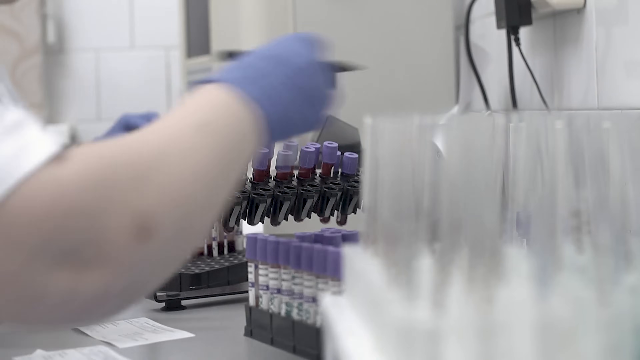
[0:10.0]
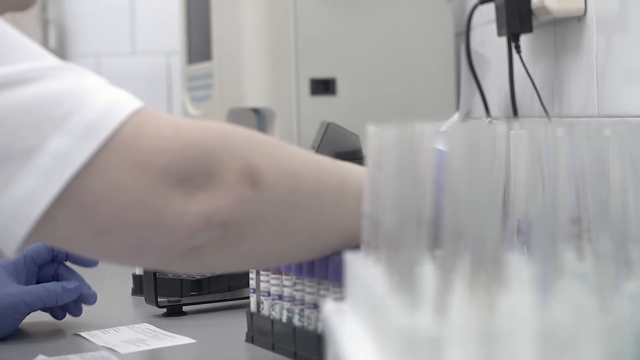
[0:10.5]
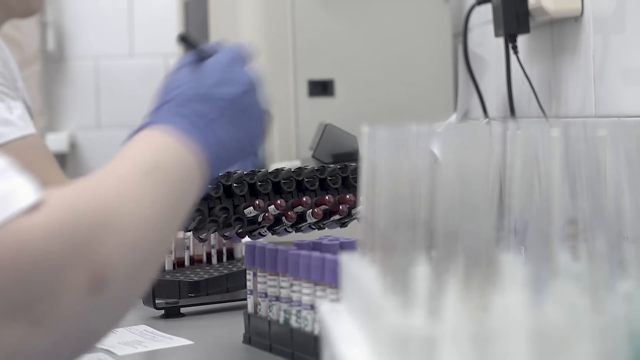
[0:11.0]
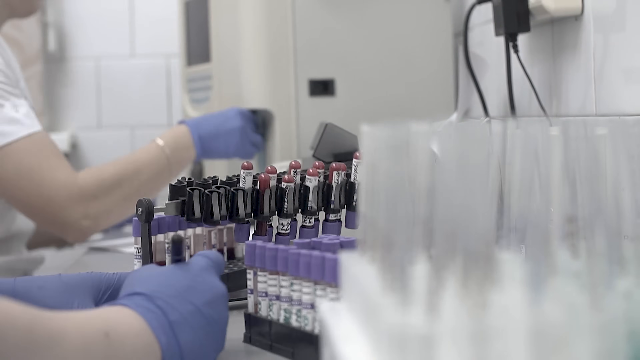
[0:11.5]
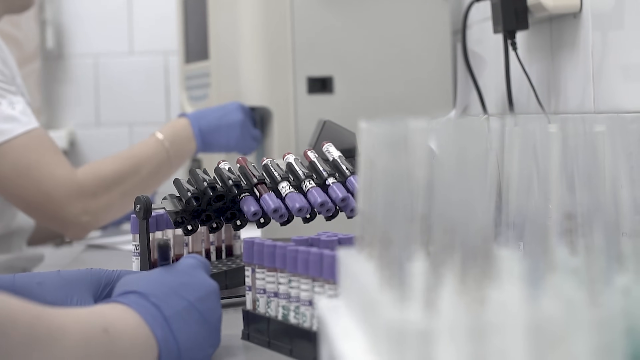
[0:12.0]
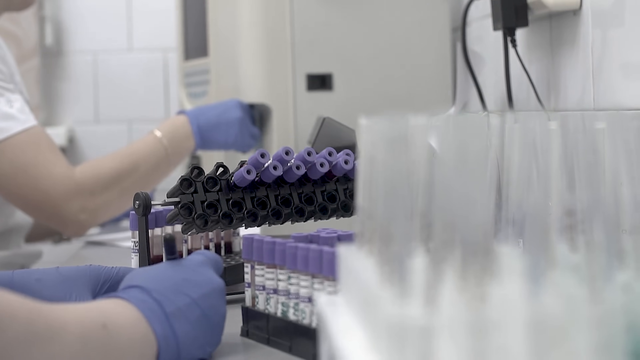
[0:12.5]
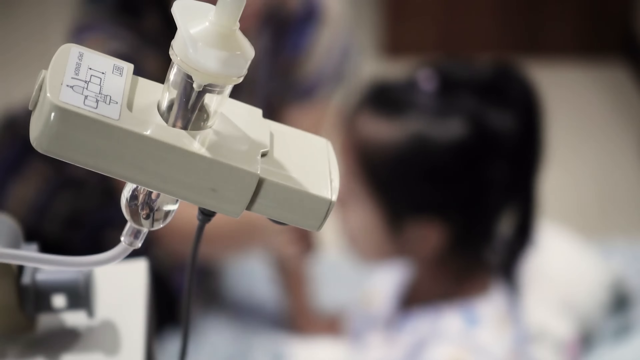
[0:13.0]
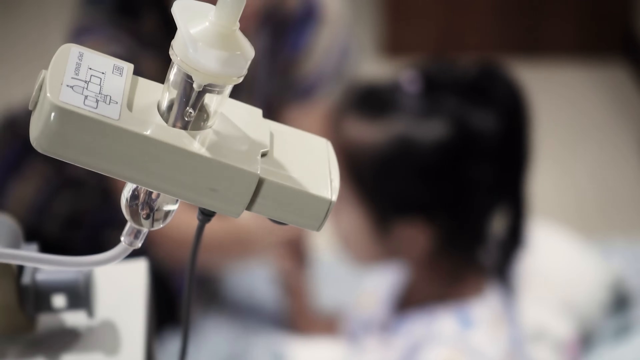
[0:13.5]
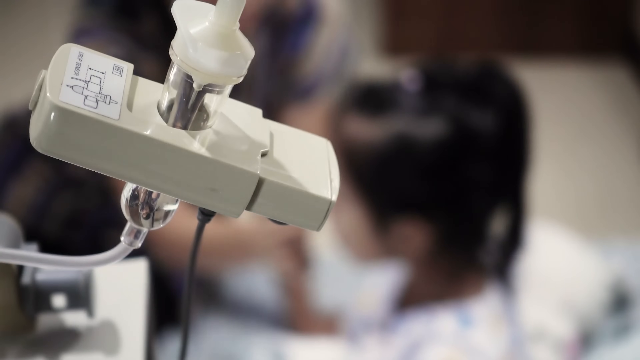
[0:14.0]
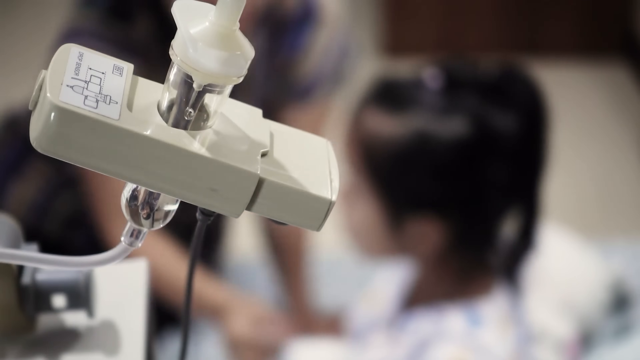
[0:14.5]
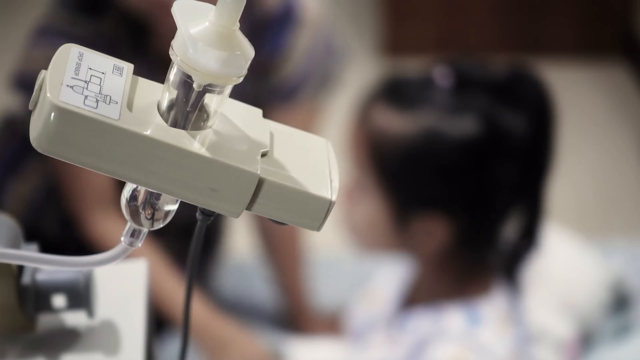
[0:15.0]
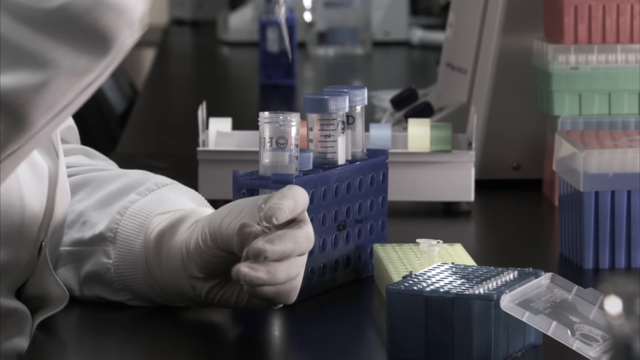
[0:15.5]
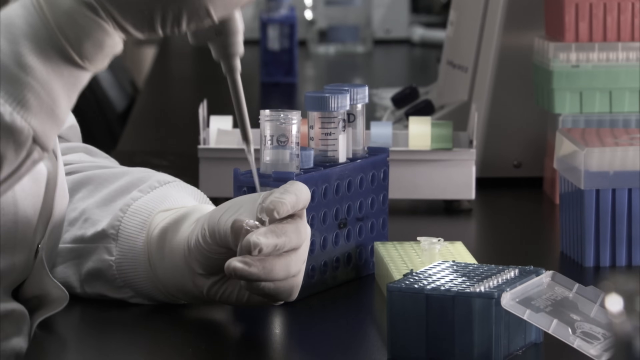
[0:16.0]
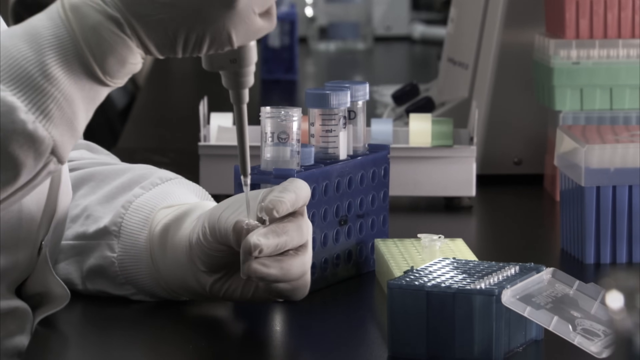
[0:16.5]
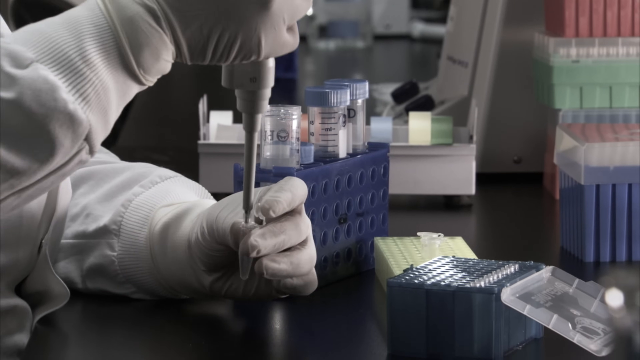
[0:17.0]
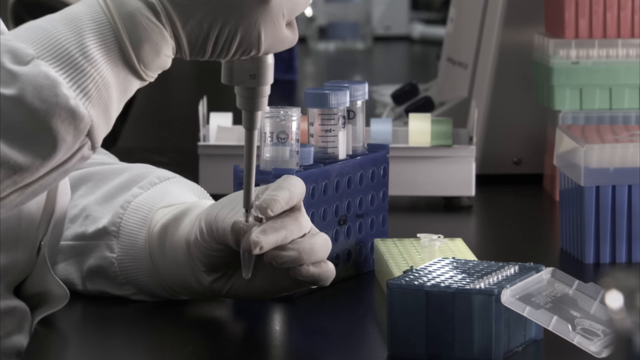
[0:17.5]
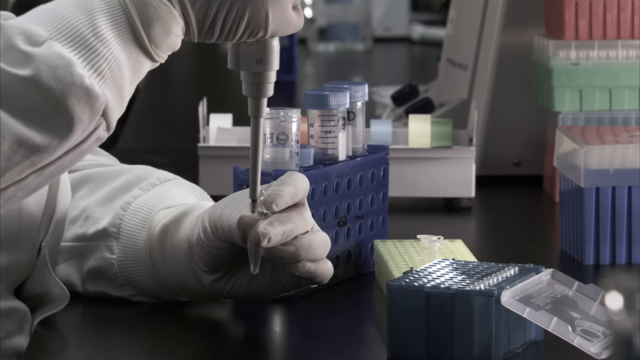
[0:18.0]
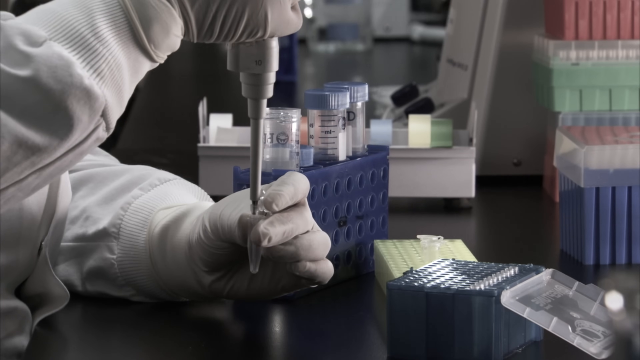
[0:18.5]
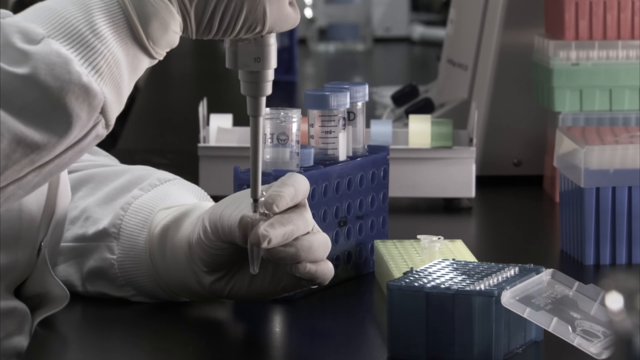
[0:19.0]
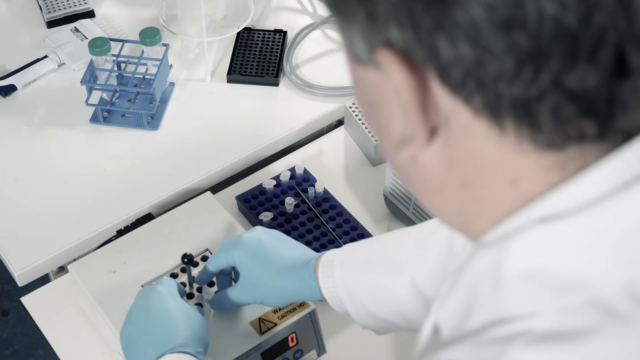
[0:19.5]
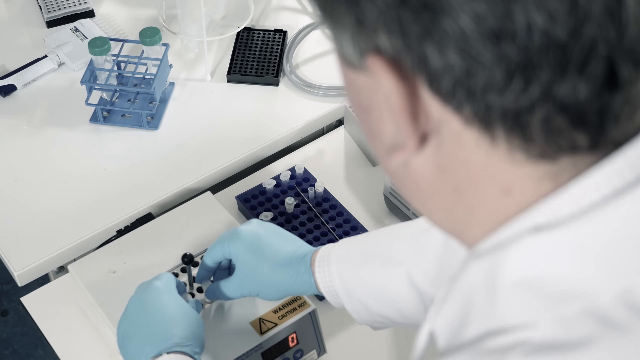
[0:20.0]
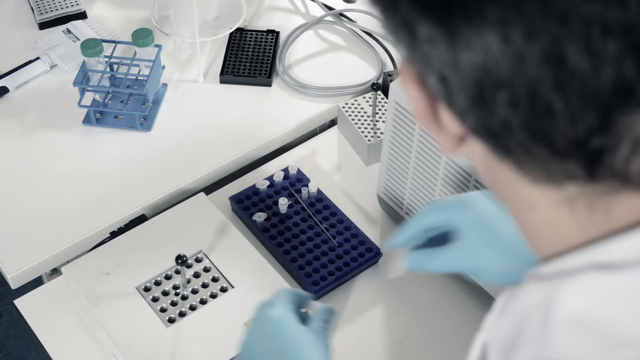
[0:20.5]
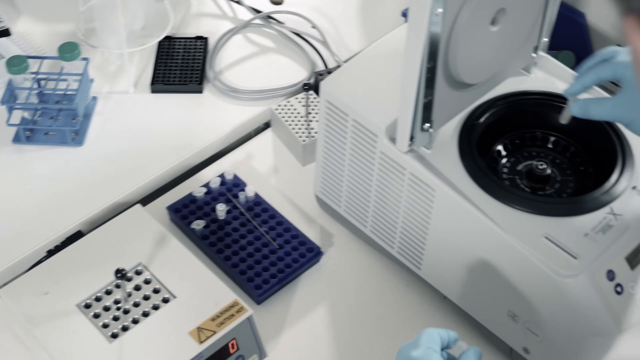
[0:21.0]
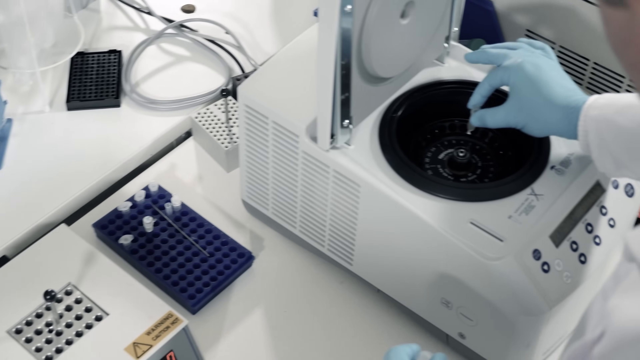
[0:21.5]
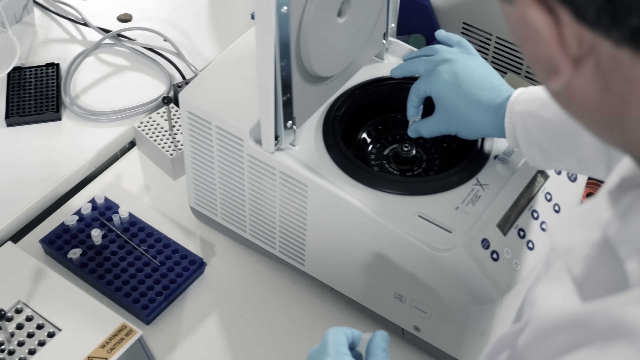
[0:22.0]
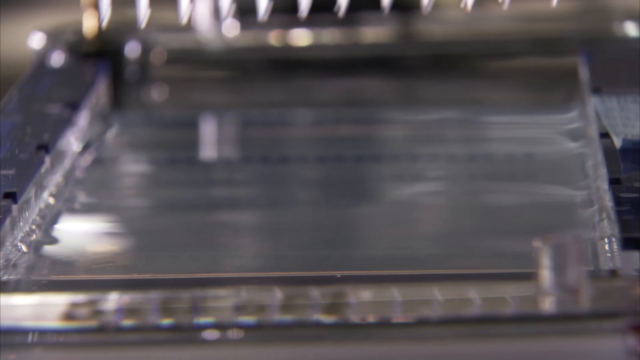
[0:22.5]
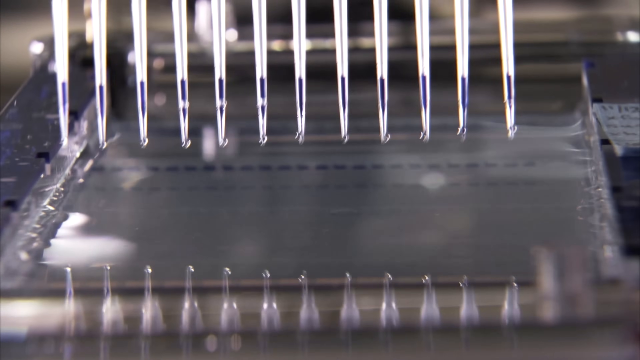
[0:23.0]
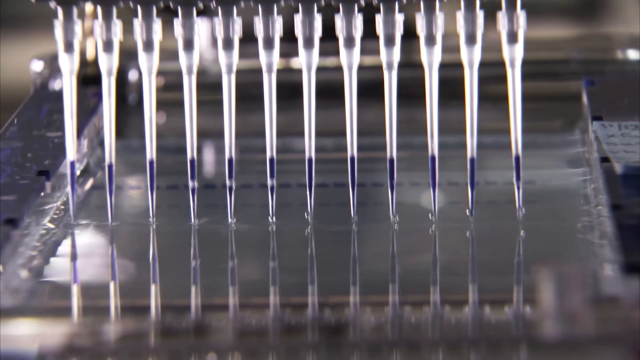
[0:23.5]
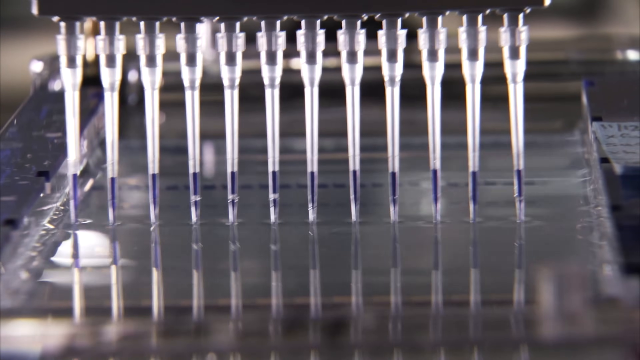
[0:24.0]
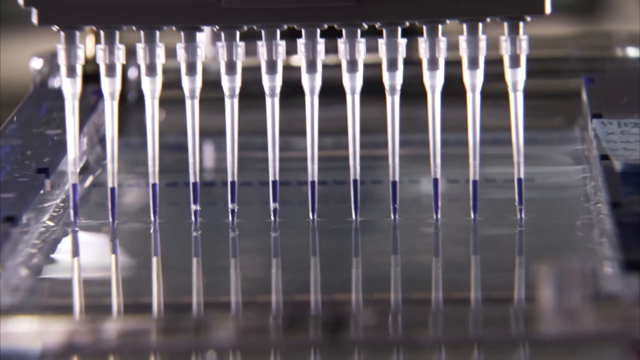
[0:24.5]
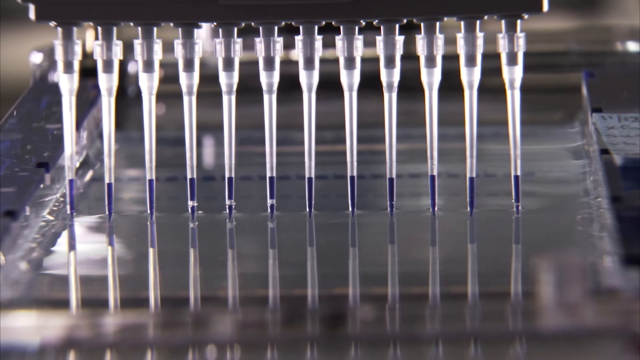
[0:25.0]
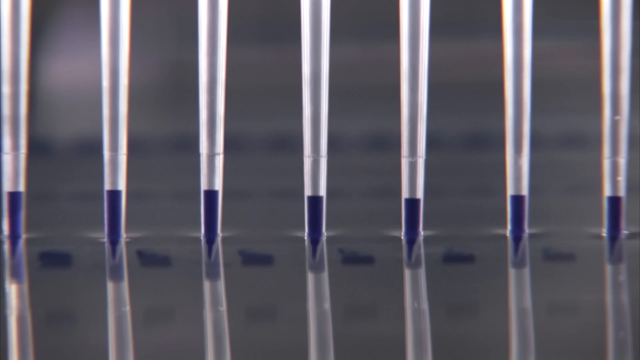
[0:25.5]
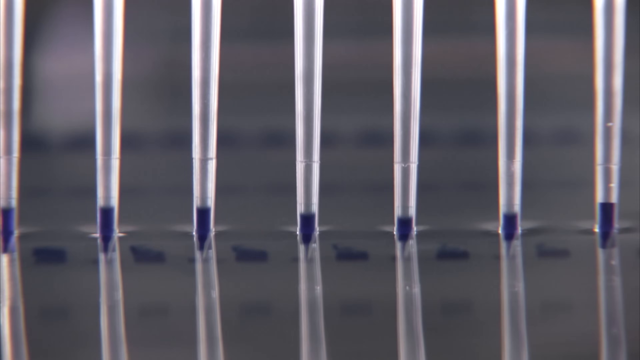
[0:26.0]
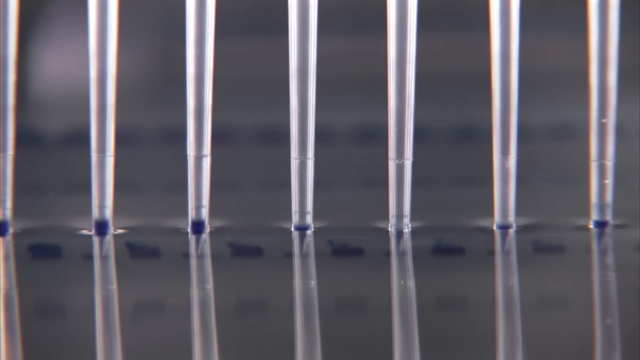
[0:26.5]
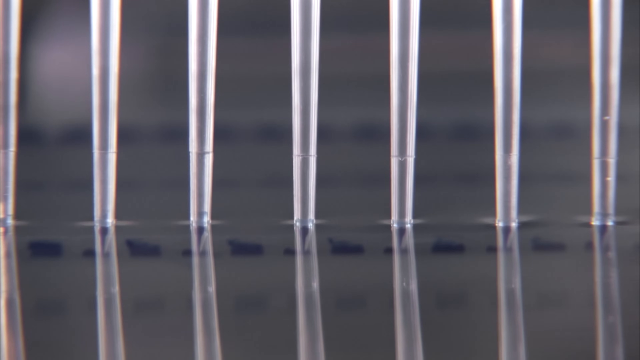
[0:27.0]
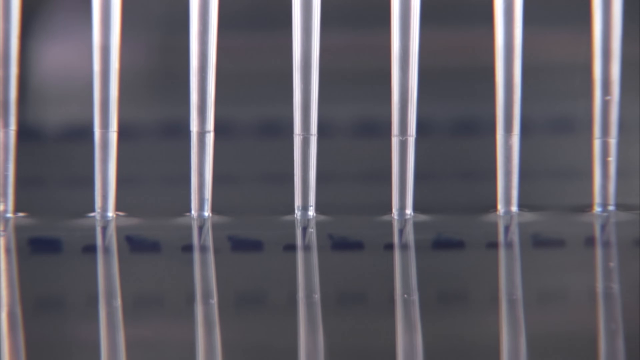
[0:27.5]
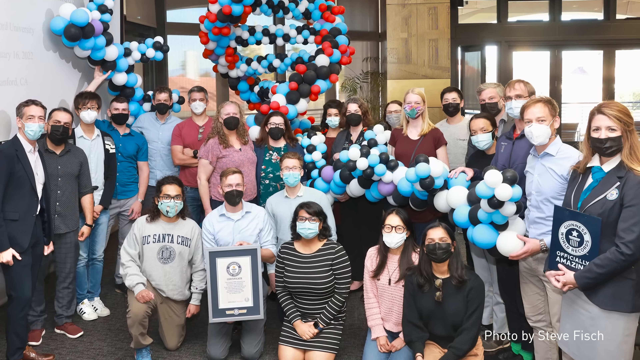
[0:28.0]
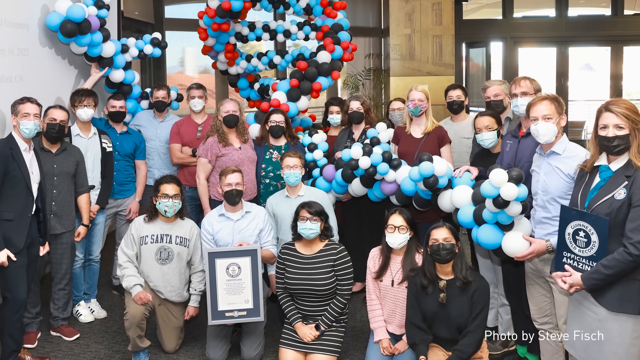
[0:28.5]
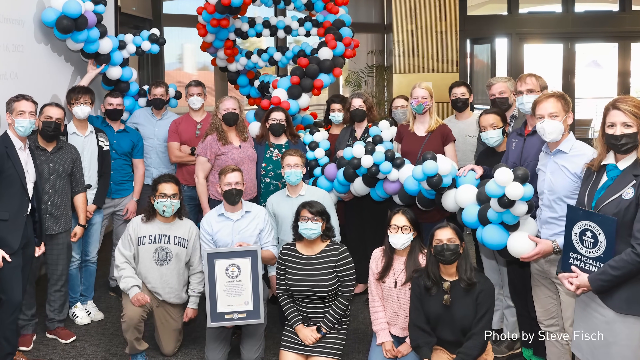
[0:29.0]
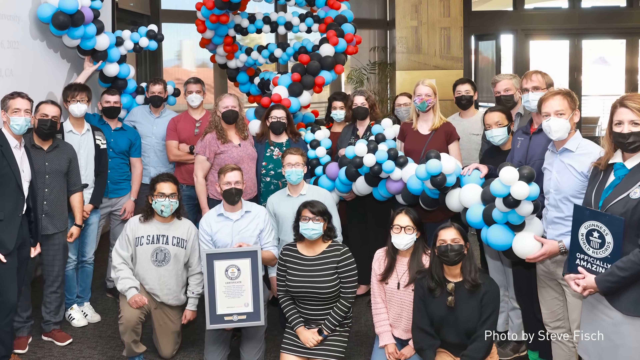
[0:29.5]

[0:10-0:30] Test tubes are being filled with blood, and they are in a centrifuge being spun at a lab. Two people wearing blue gloves handle the centrifuges. A device that looks kind of like an IV has liquid dripping inside. A scientist wearing white gloves fills a test tube, and another scientist wearing blue gloves puts test tubes in a centrifuge. A number of what look like probably thermometers are being made. A number of people pose for a photo, every one of them wearing a mask, apparently during COVID. Off to the left, text reads "Guinness World Record, officially amazing"; apparently these people won a Guinness World Record for something.